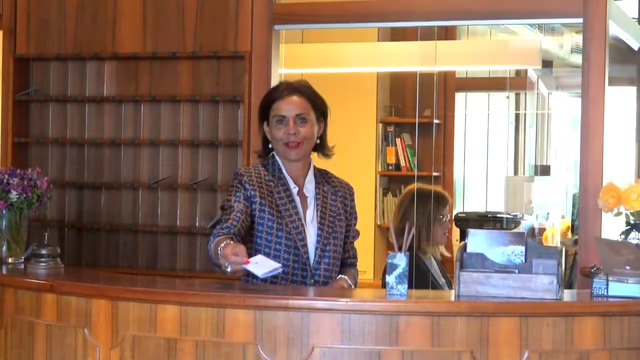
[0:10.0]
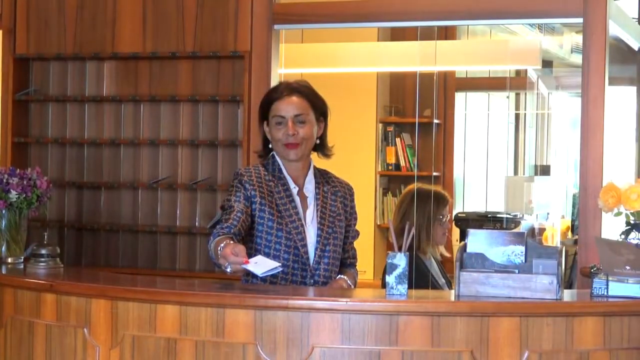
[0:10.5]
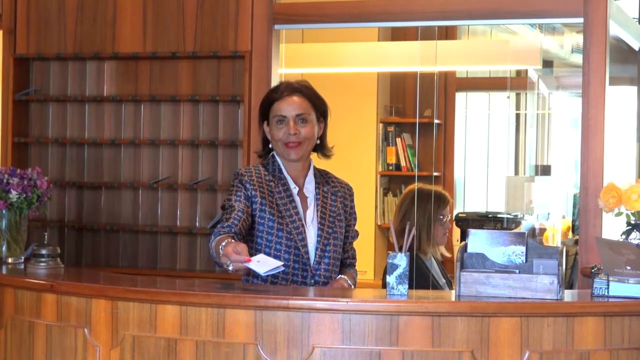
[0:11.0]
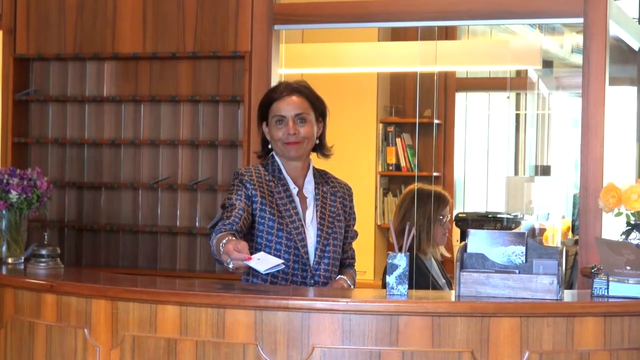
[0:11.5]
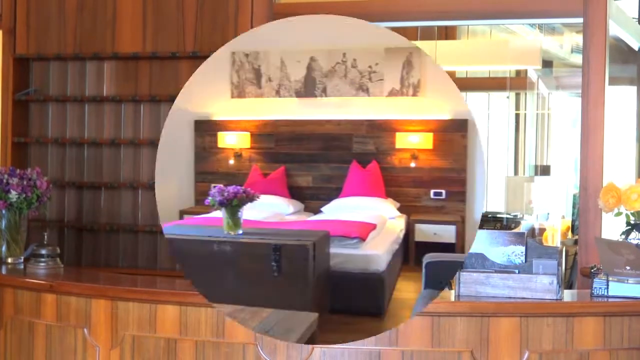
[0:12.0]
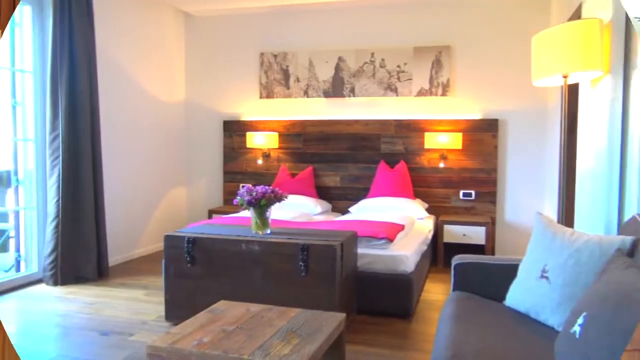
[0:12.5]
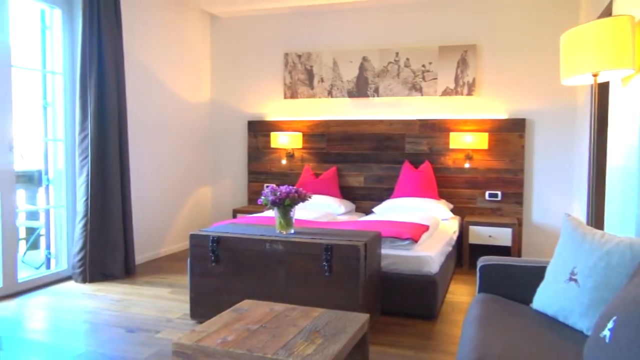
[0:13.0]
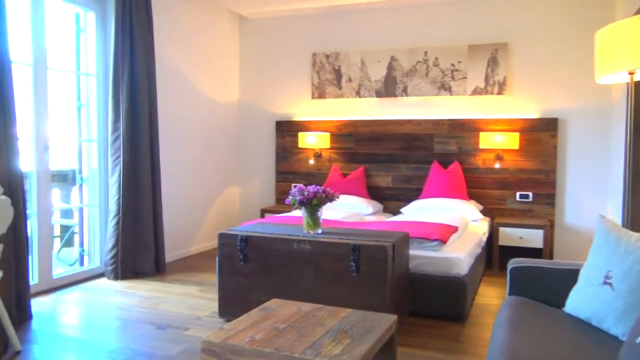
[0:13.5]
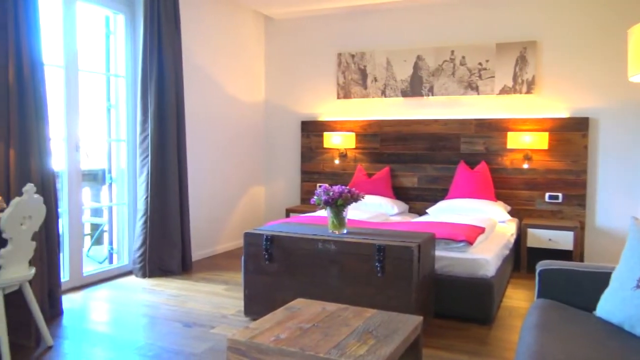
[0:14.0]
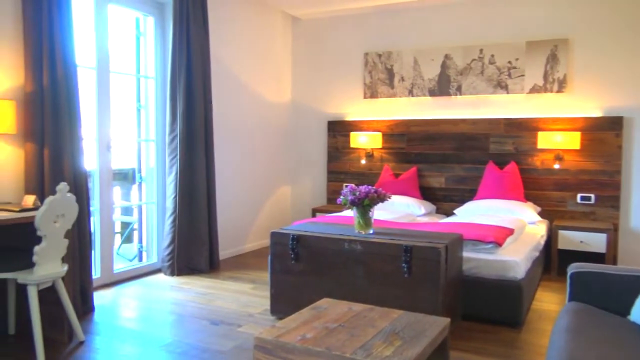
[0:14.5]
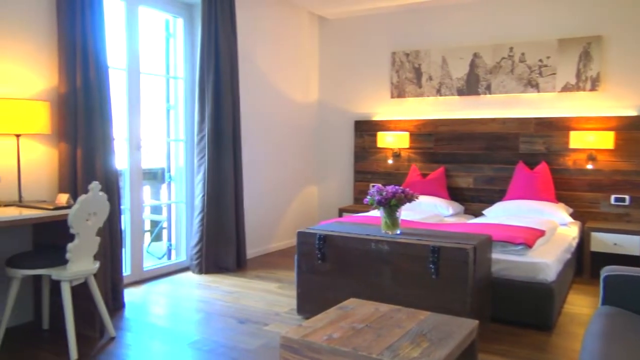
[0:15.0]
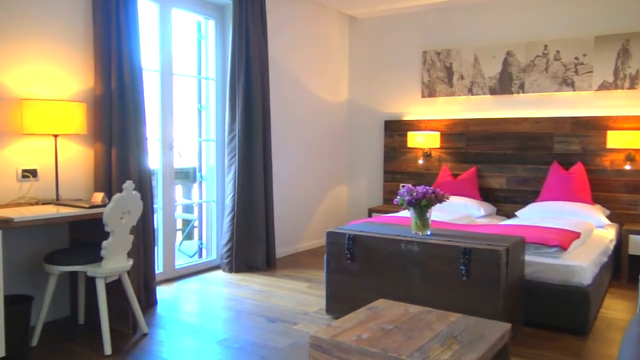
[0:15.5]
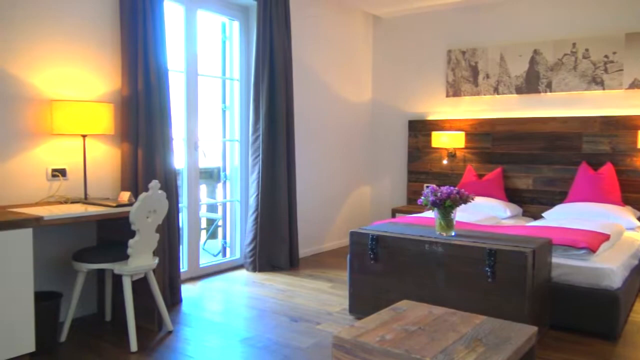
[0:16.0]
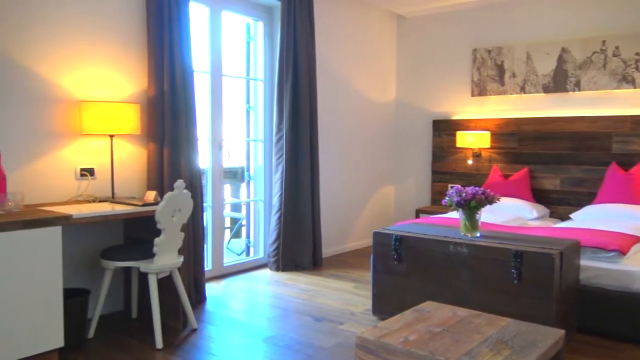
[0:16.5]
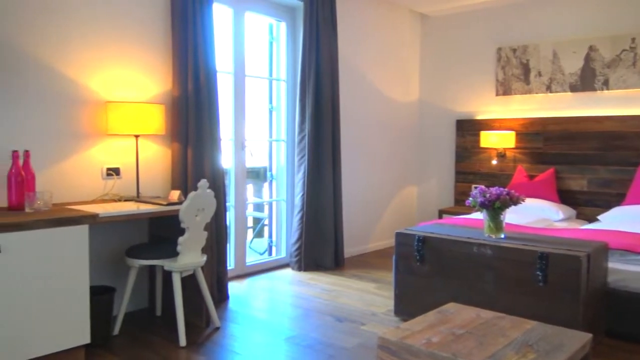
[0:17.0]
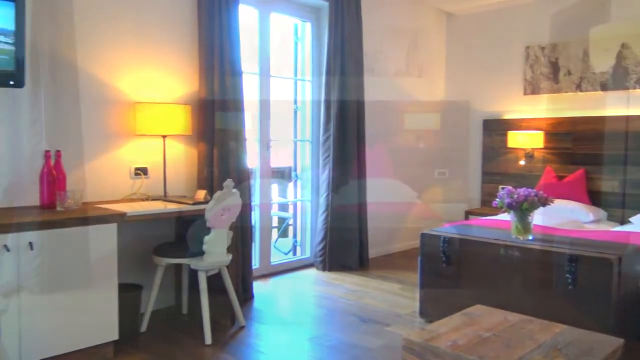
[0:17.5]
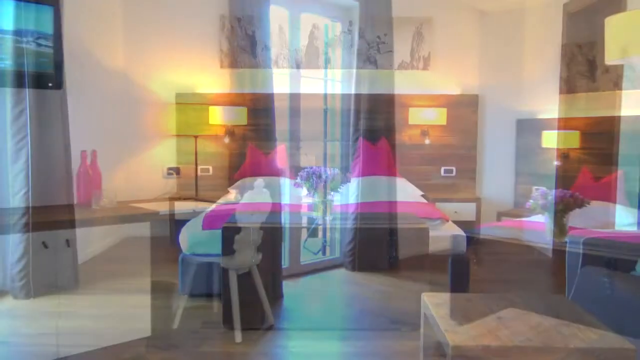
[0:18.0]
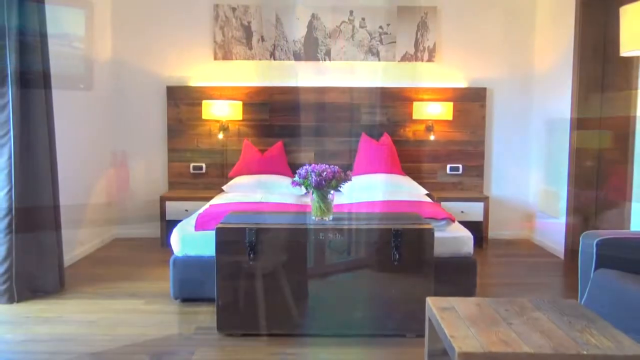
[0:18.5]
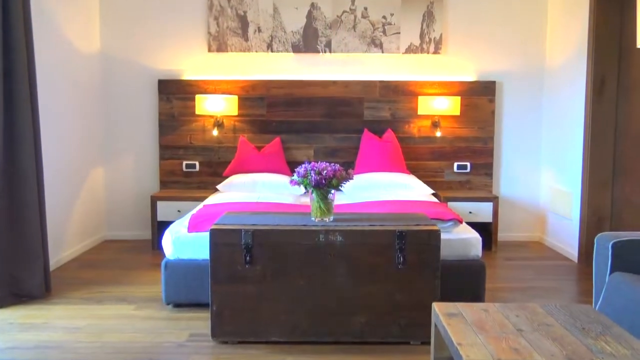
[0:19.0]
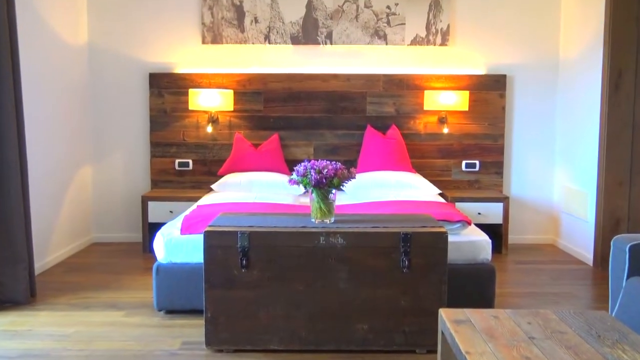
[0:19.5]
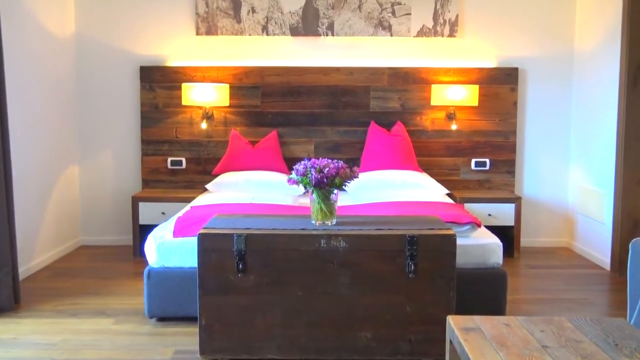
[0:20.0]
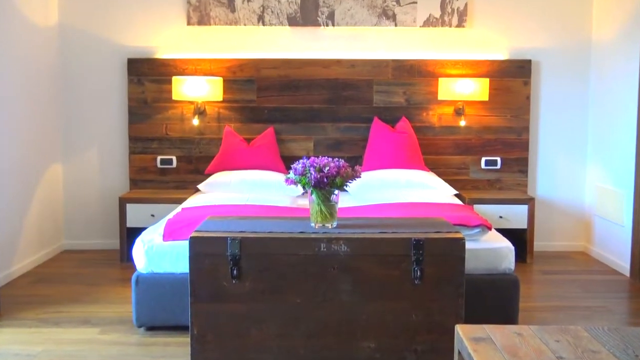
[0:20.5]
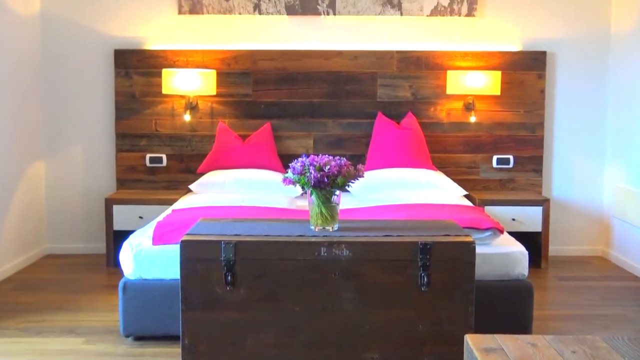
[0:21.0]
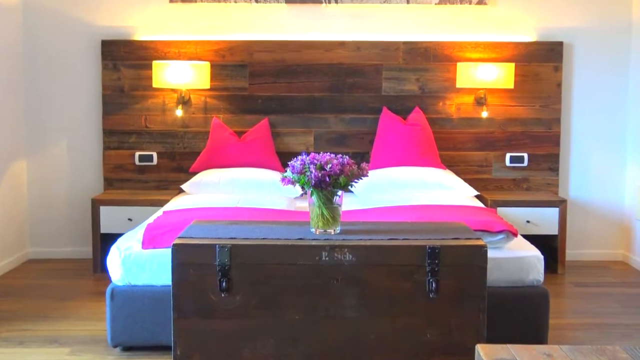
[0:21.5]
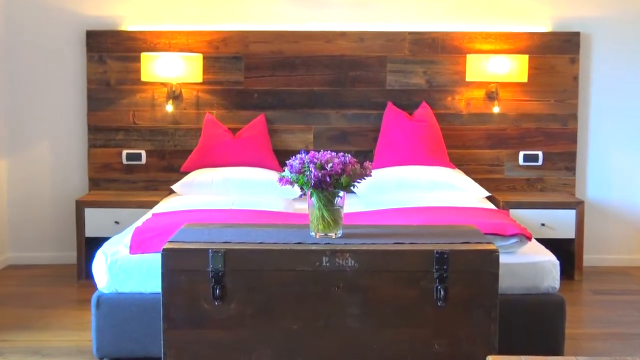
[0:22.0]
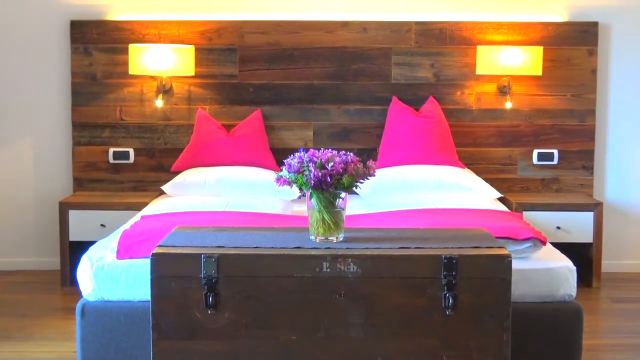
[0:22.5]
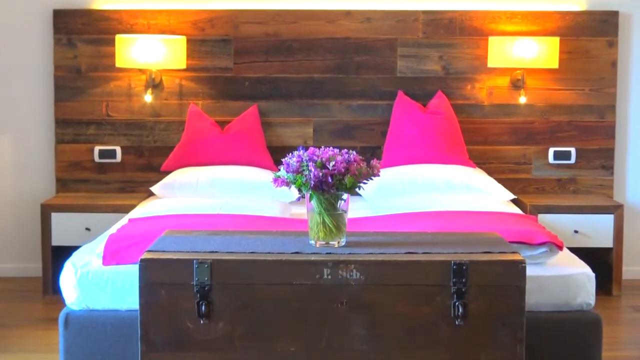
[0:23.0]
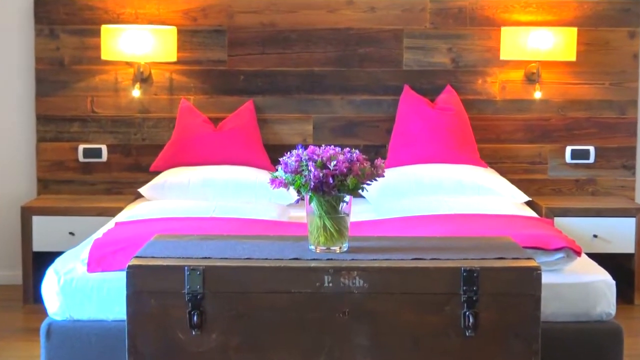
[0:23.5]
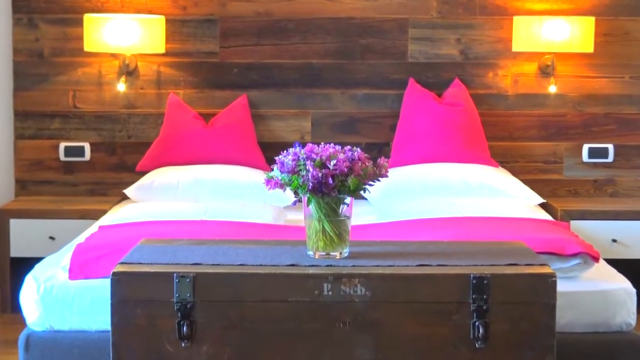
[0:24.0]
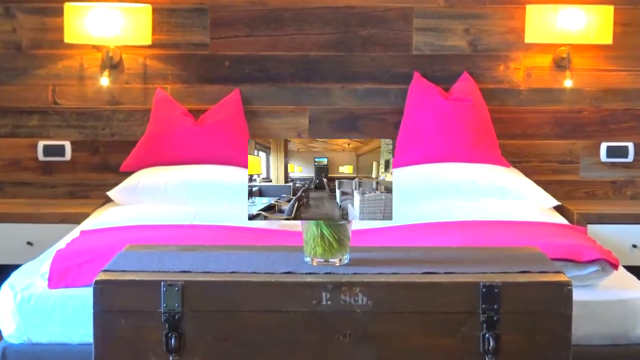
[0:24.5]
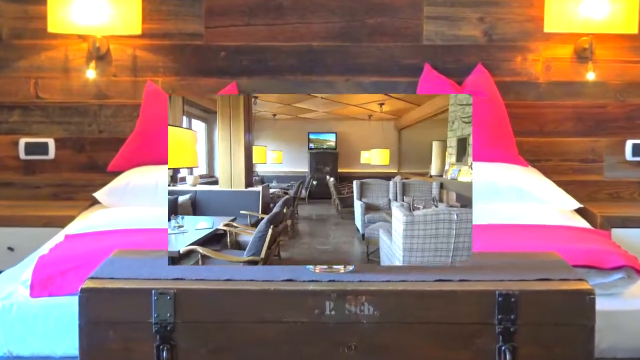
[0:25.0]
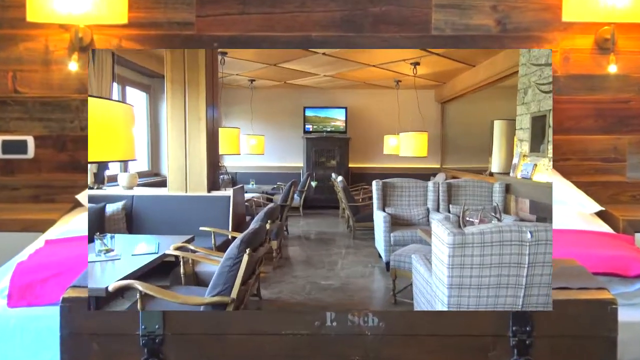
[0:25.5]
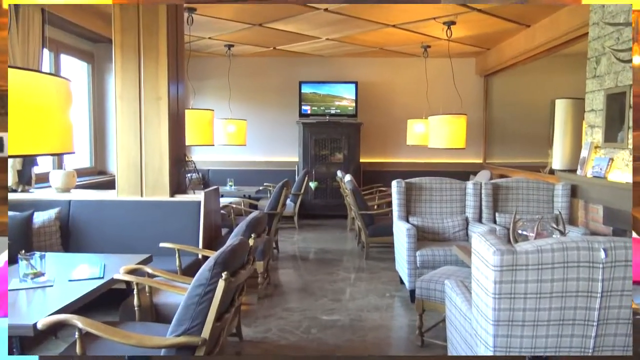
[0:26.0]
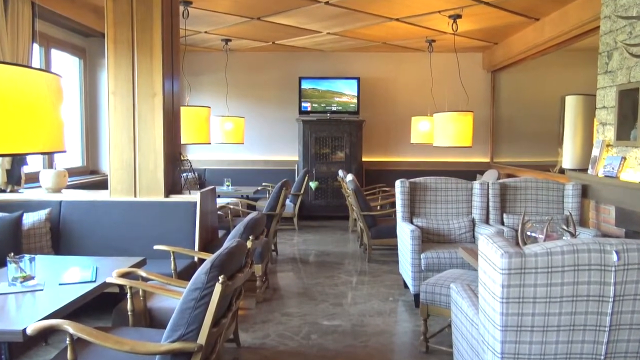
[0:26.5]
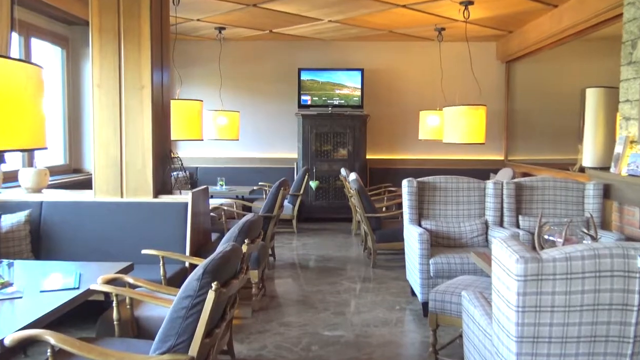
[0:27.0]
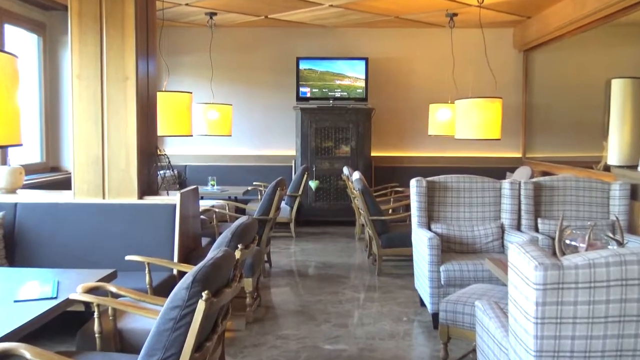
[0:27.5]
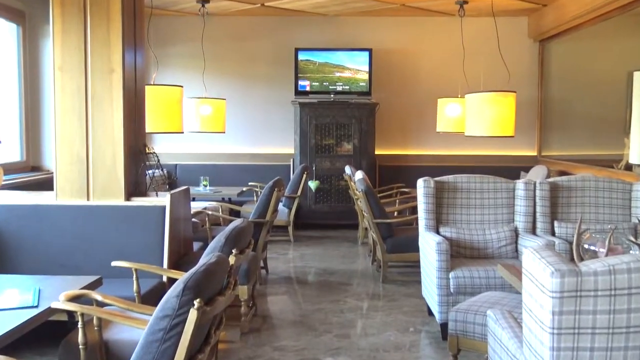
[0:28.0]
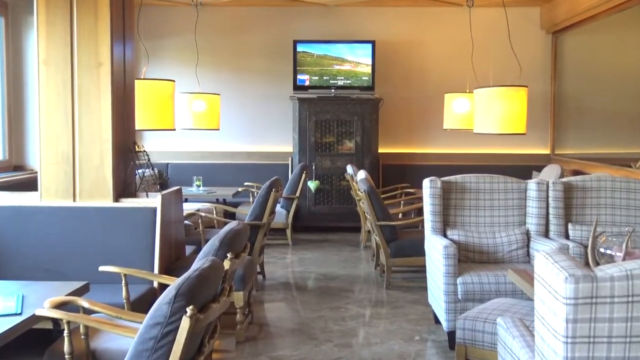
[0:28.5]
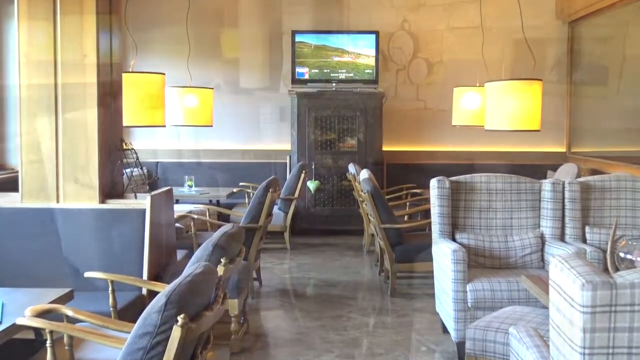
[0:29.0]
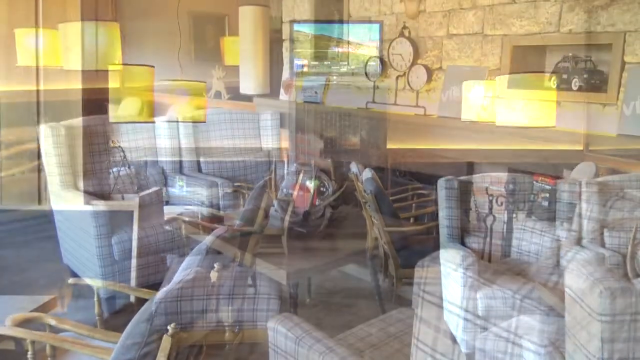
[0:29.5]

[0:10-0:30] At the front counter of a hotel, a woman wearing a professional jacket hands off a holder for room key cards. The video then transitions to a hotel room with a queen sized bed that has white pillows, a red duvet cover on top, and decorative red pillows above the white pillows. The headboard appears to be made of horizontal wood pieces with yellow light lamps attached to them, and there is a nightstand on both sides of the bed. At the foot of the bed is a table with purple flowers. The walls are painted white, and there appears to be an artwork of indiscernible design against the back wall above the headboard. A tall floor-to-ceiling window on the left-hand side opens up to a balcony, with a desk to the left of the window and a vanity. The video then transitions to the foyer of the hotel.